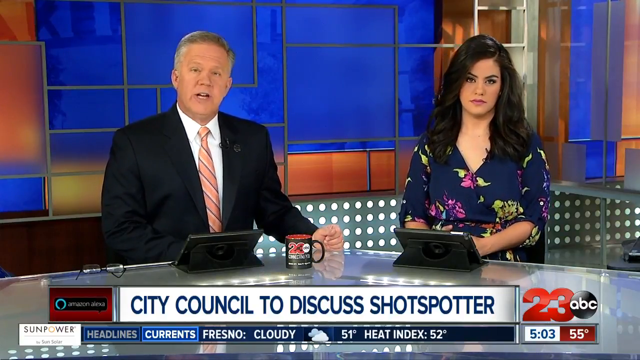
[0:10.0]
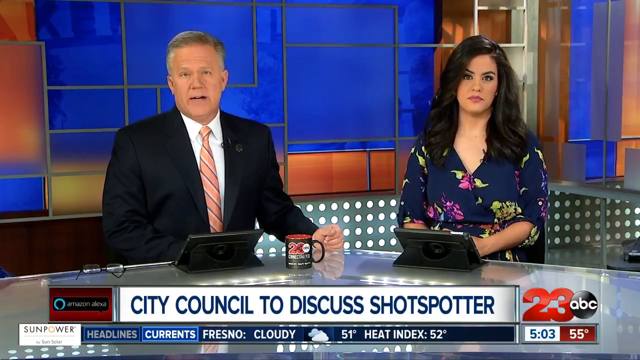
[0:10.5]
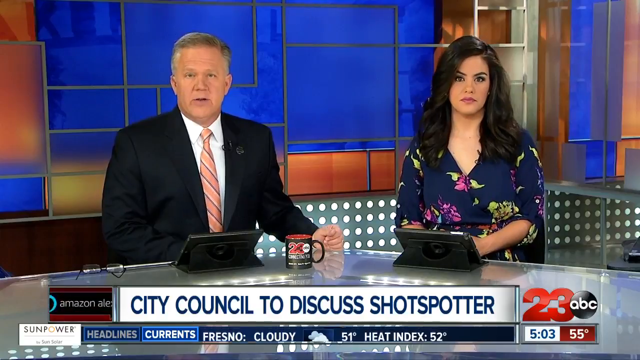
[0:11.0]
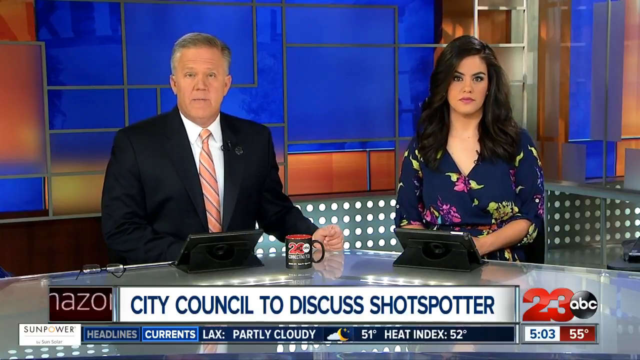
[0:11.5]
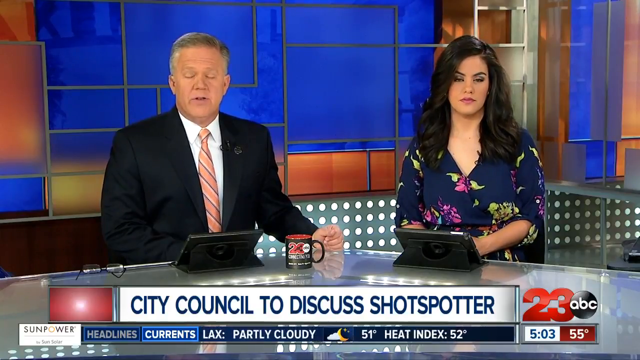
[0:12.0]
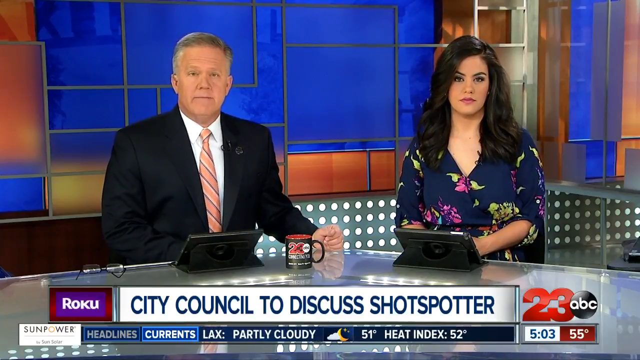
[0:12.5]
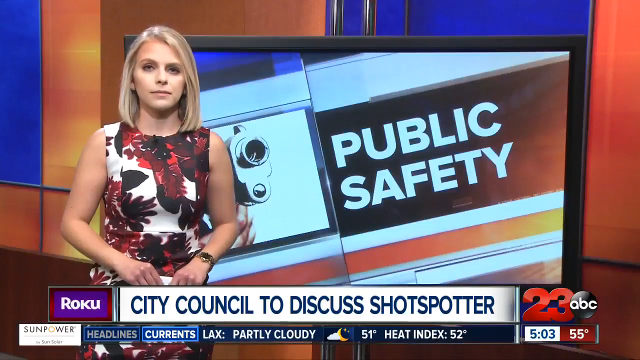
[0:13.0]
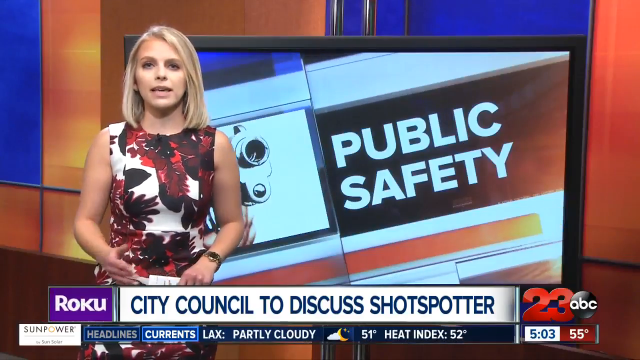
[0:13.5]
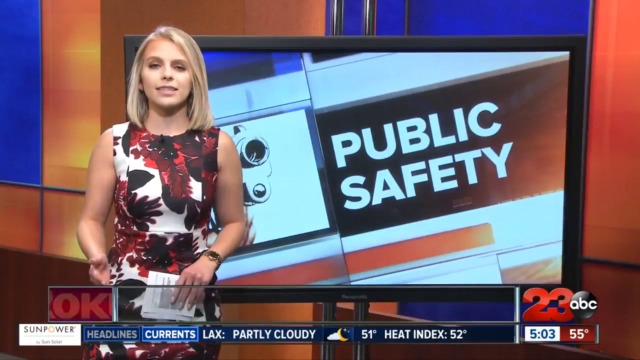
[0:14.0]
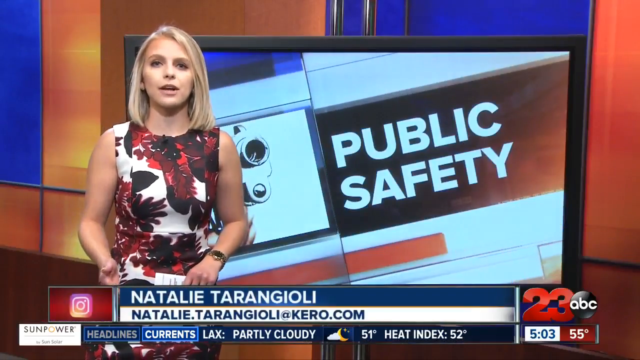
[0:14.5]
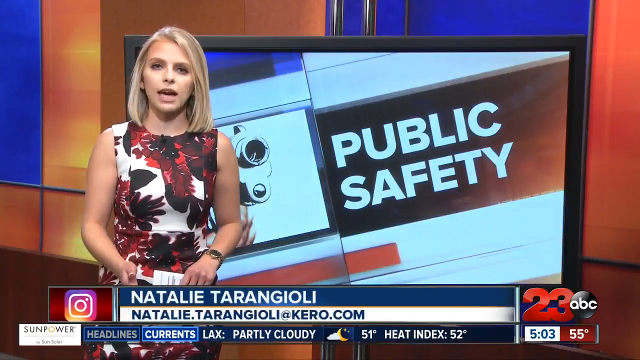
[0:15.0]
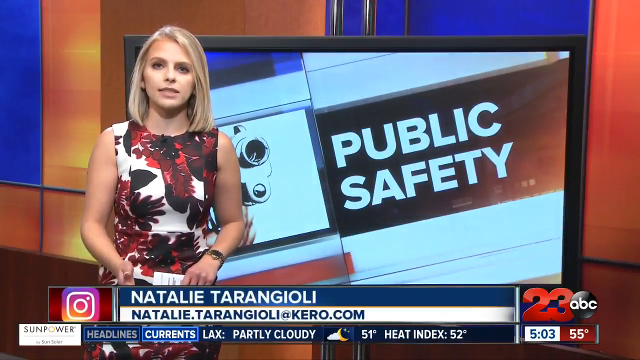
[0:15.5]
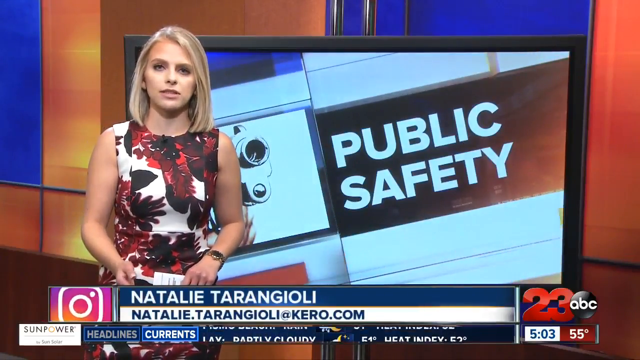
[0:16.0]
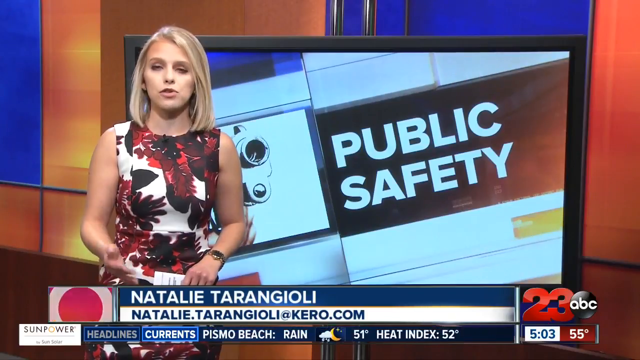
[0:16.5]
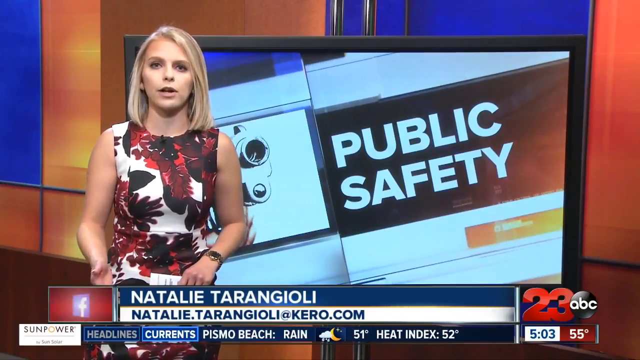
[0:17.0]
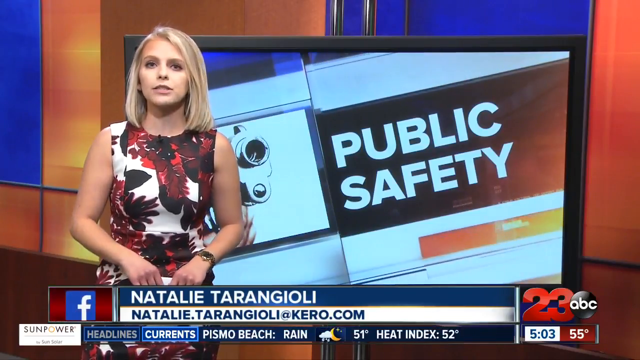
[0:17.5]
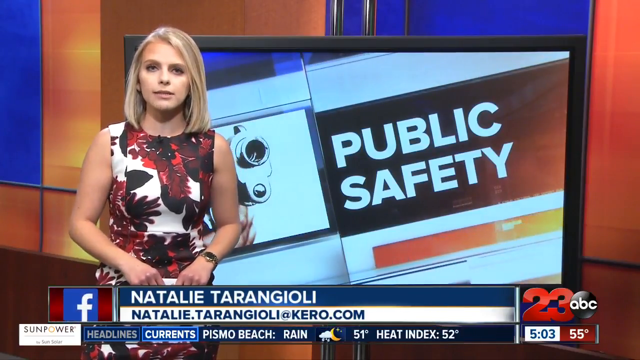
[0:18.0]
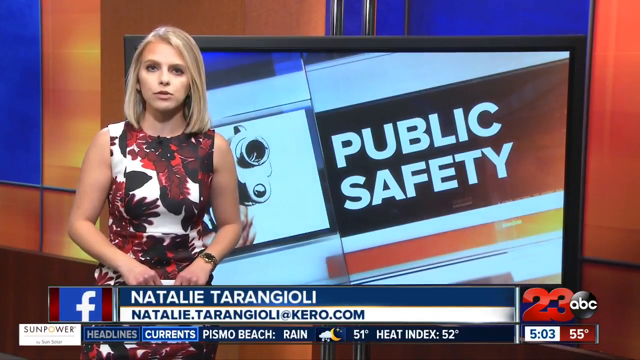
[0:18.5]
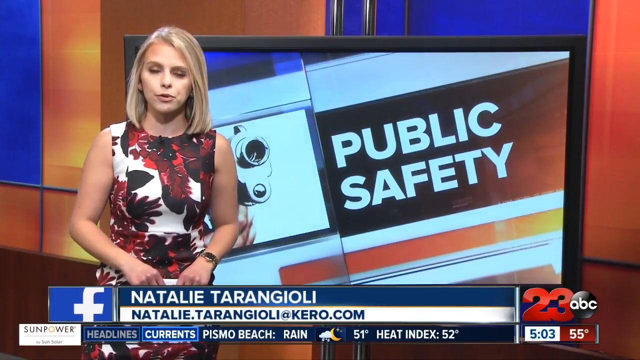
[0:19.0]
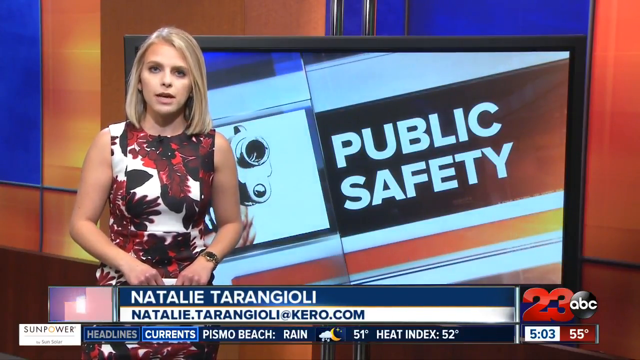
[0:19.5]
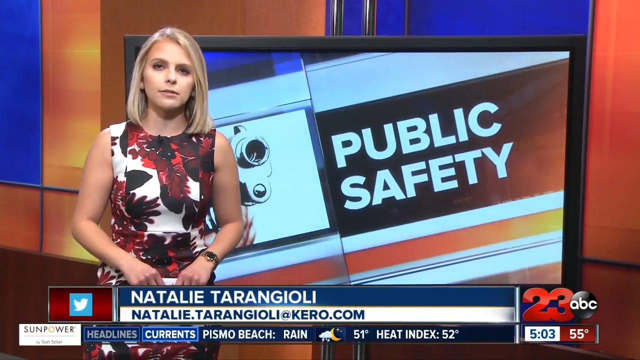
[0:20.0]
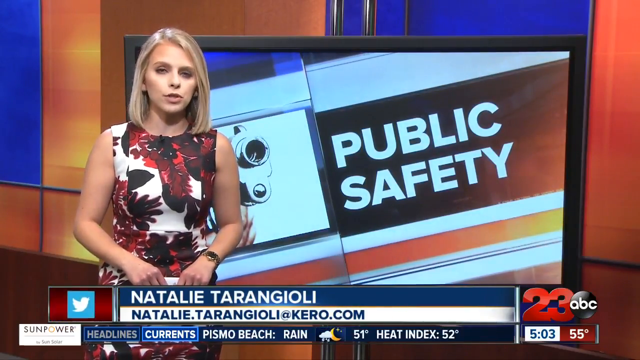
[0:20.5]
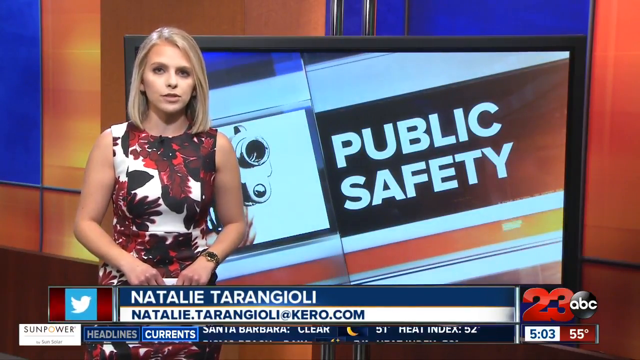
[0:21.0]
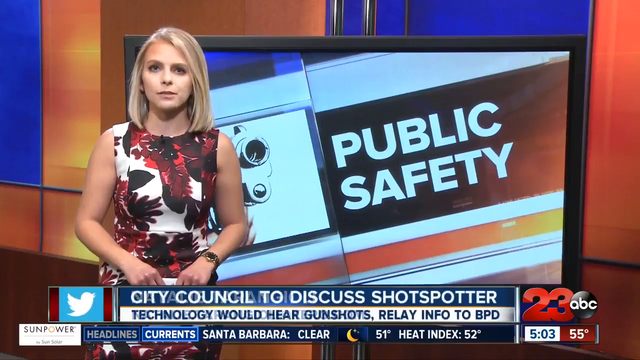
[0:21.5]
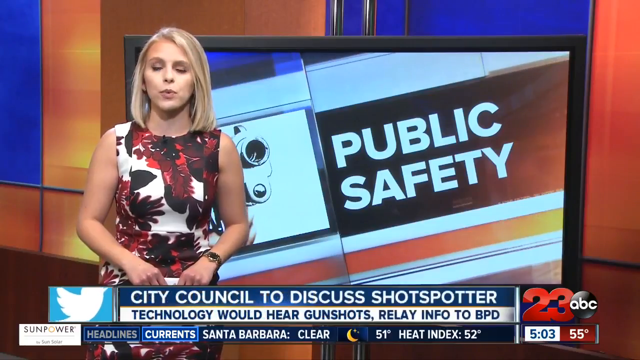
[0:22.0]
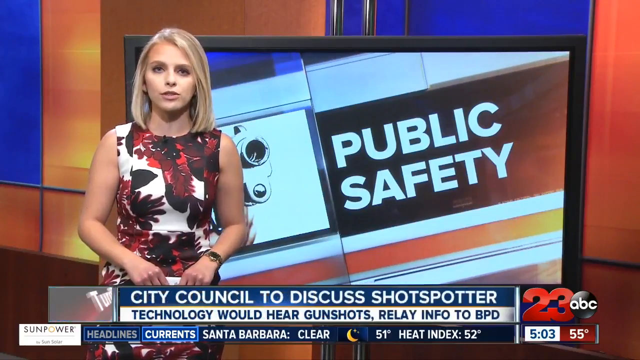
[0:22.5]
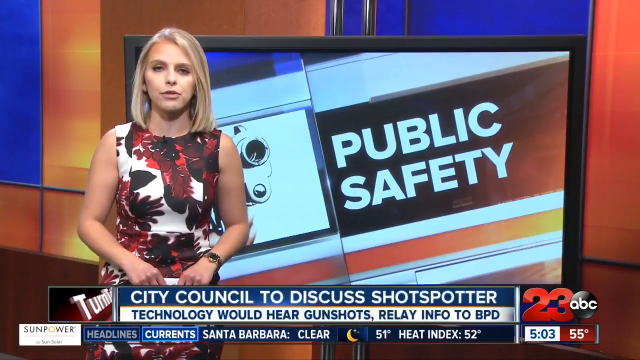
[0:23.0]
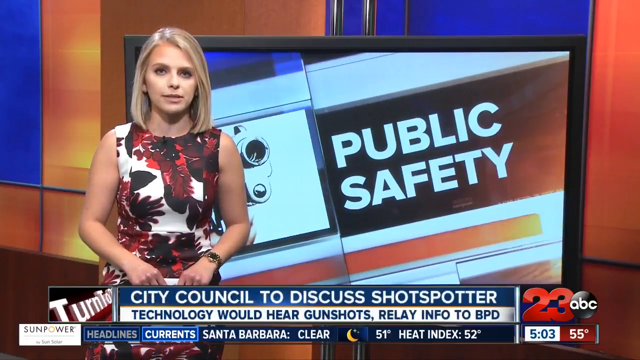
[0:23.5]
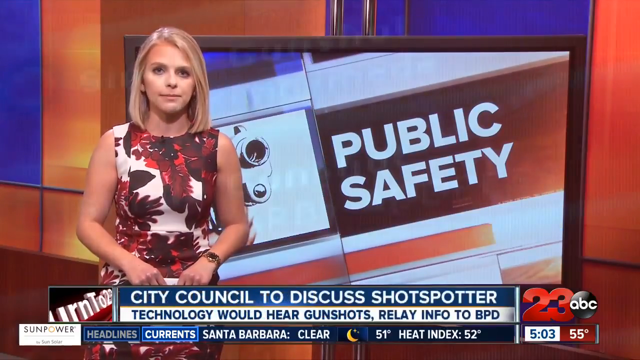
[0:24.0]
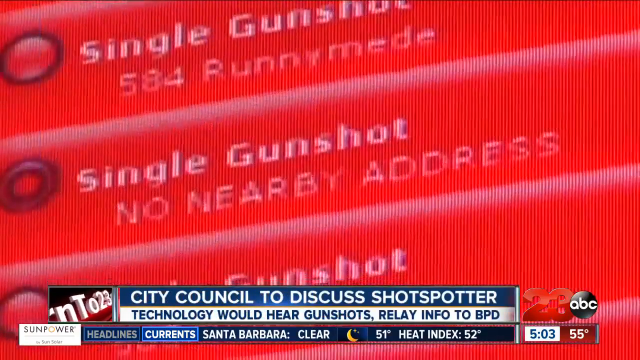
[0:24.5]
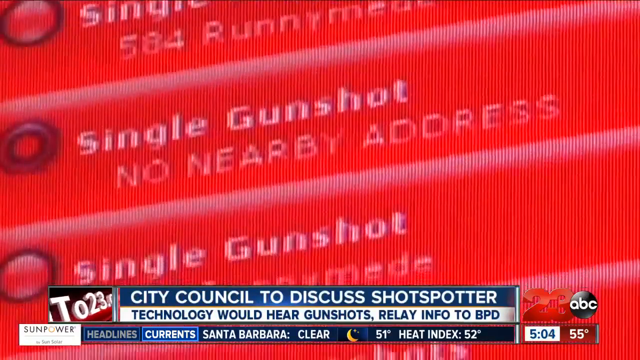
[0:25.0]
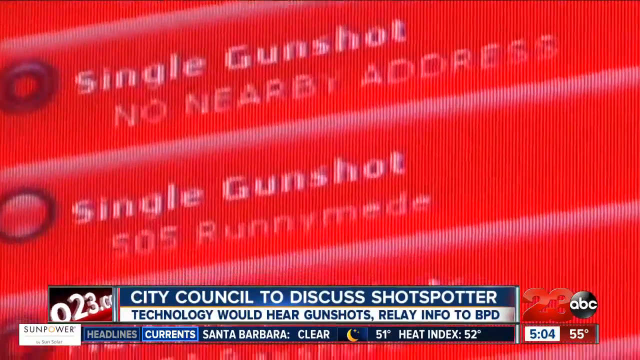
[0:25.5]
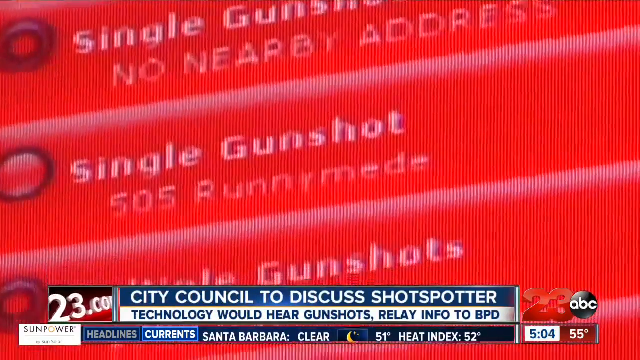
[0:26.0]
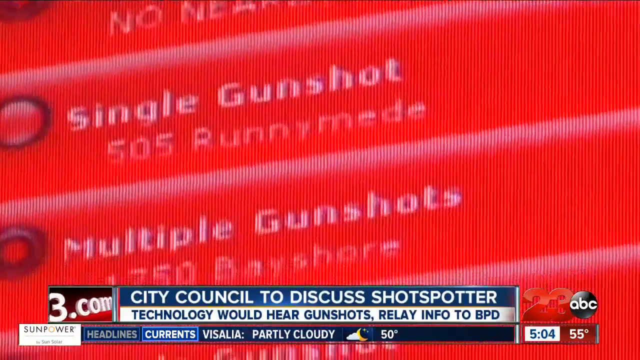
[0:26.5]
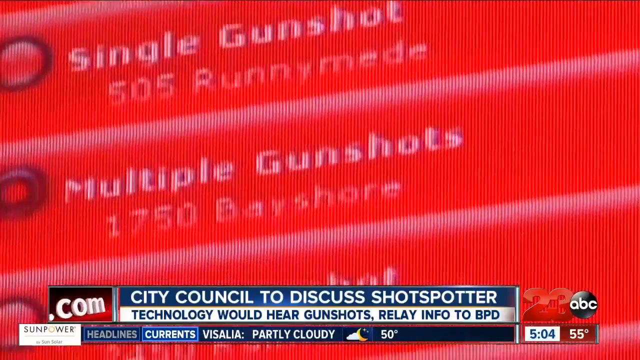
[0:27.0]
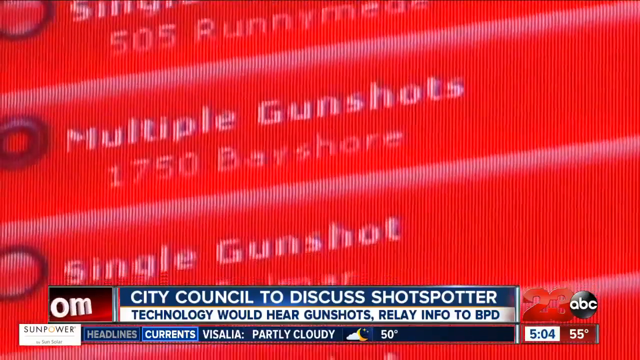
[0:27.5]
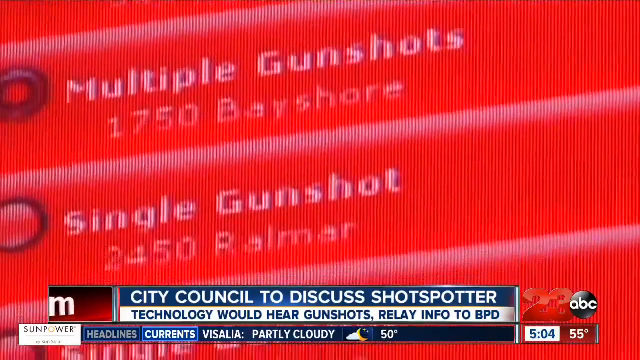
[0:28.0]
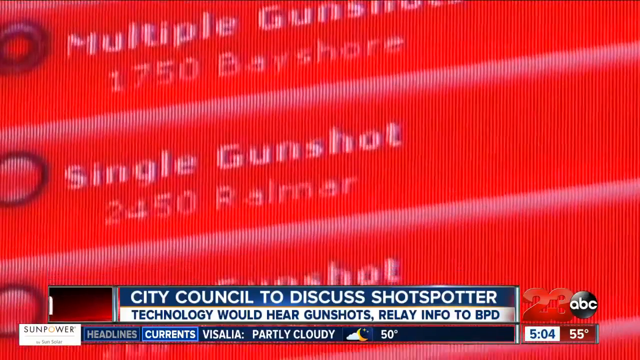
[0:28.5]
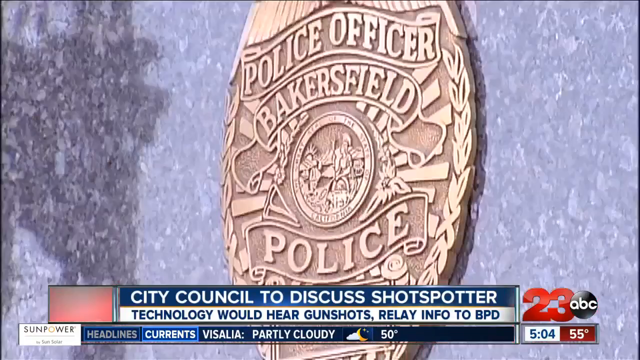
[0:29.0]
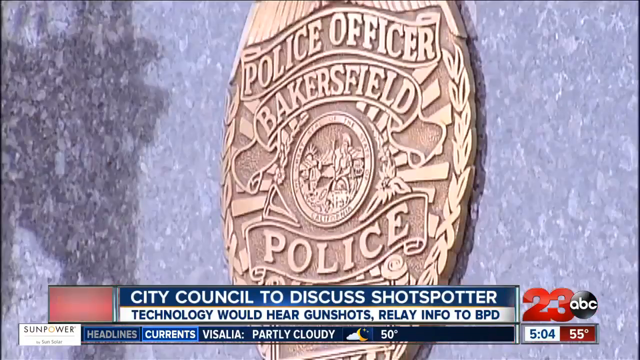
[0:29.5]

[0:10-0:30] The news report continues with the same two news reporters, and text at the bottom reads "City Council to discuss shot spotter." The channel's name is apparently 23 ABC. The video then cuts to a woman who is apparently the host of the segment, Natalie Taranagoli. She has short blonde hair, wears a thin red and white dress, and has a golden watch on her left wrist. Behind her, a screen says "public safety." A very close-up graphic of single gunshots follows, showing how many places people heard gunshots and the exact locations where they were heard.